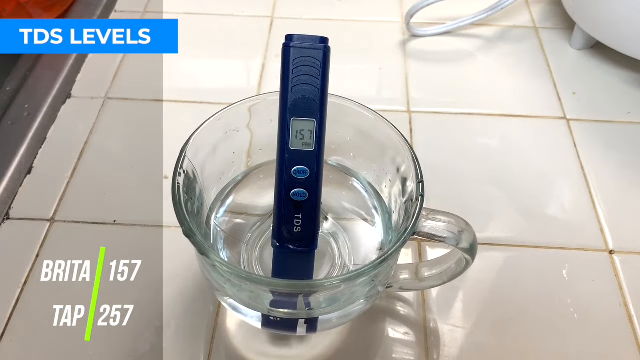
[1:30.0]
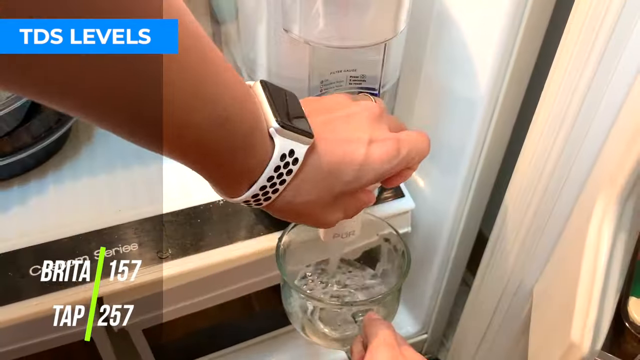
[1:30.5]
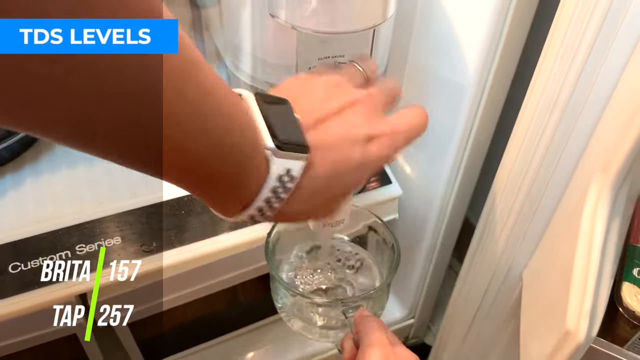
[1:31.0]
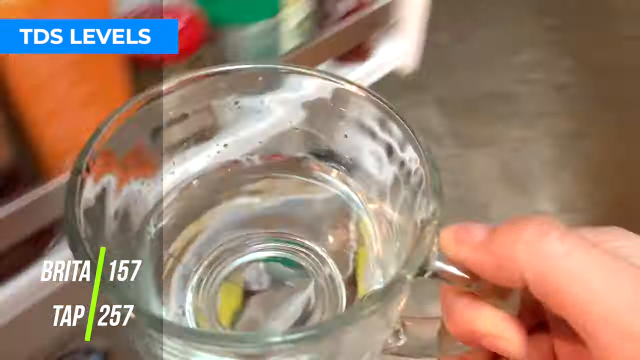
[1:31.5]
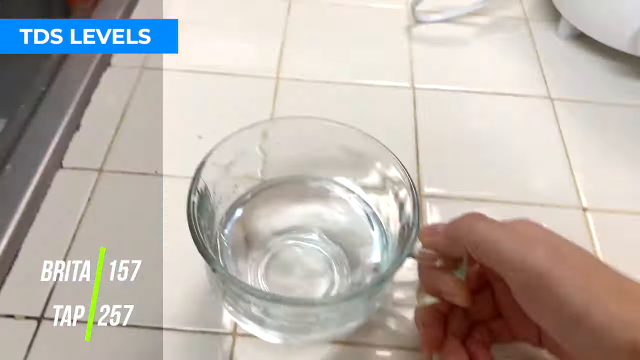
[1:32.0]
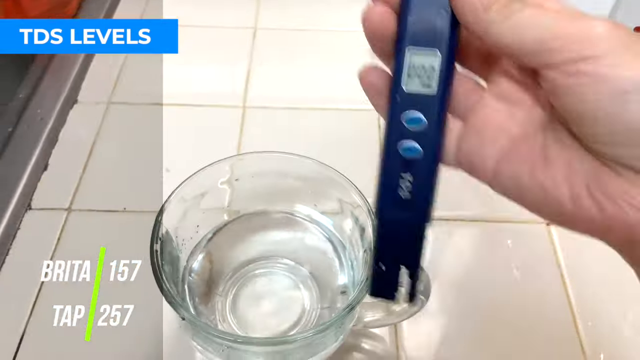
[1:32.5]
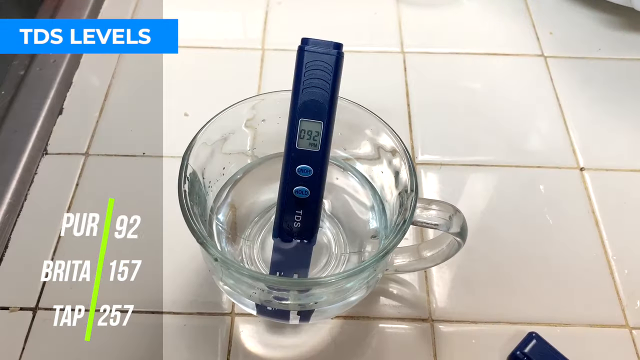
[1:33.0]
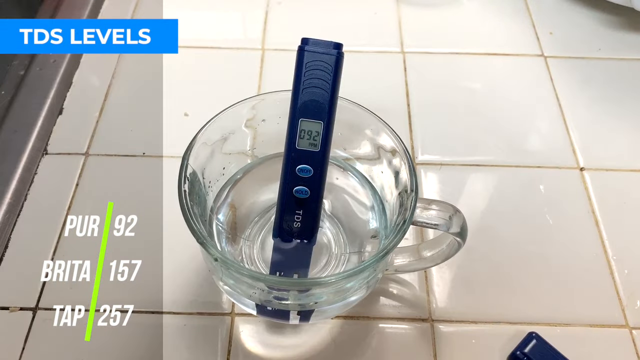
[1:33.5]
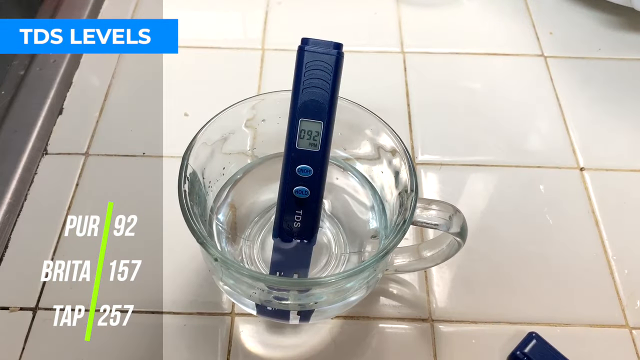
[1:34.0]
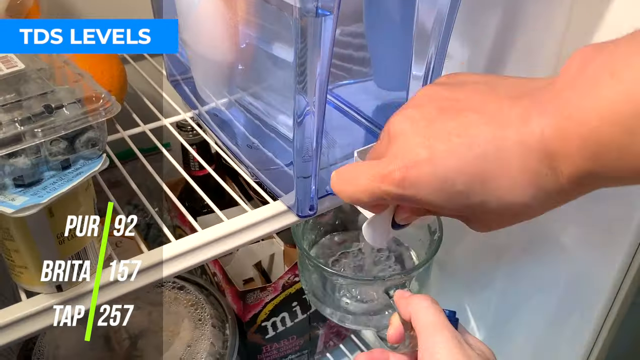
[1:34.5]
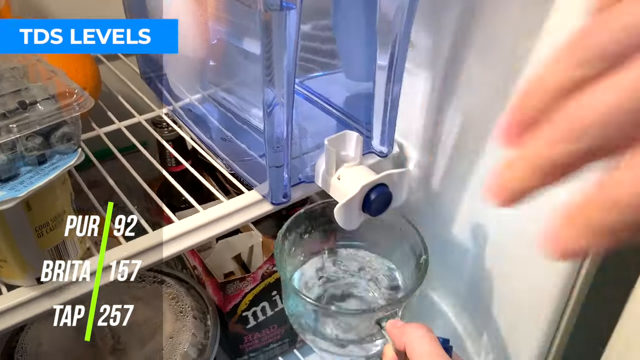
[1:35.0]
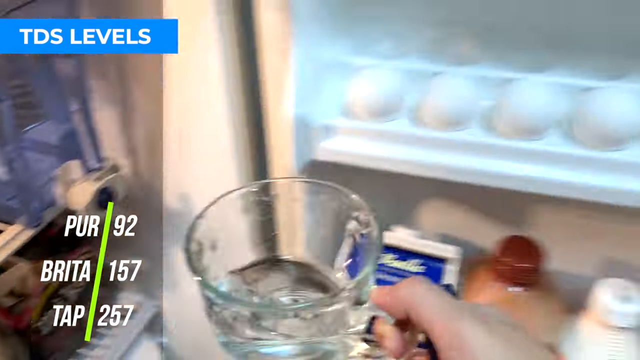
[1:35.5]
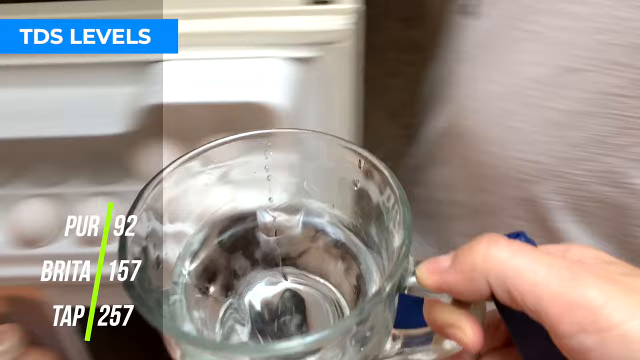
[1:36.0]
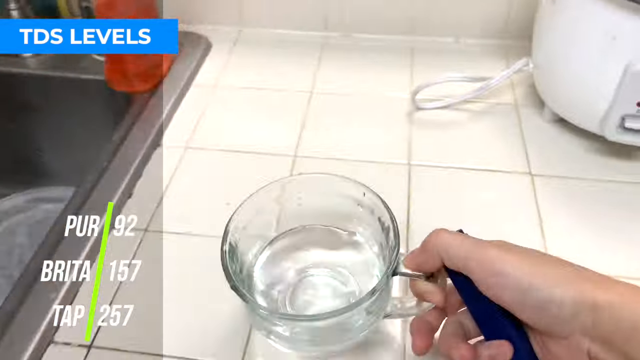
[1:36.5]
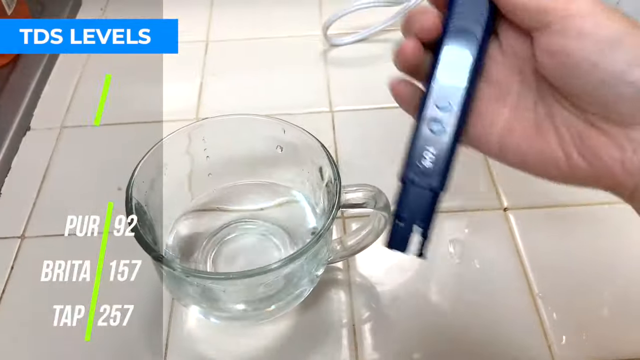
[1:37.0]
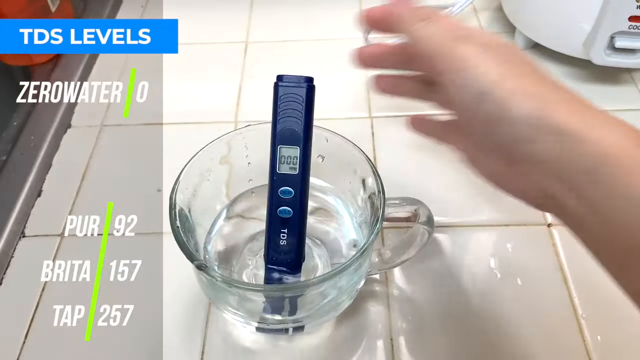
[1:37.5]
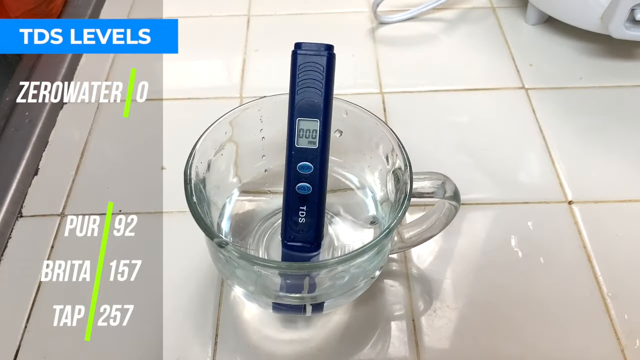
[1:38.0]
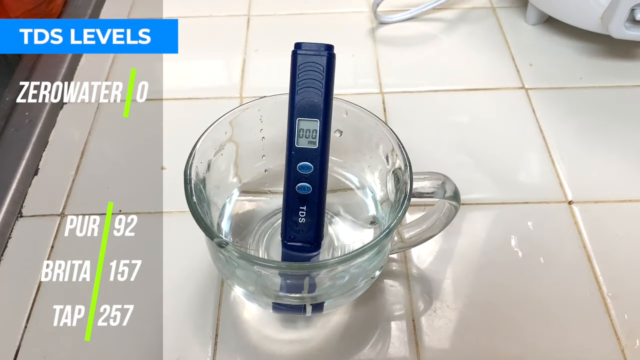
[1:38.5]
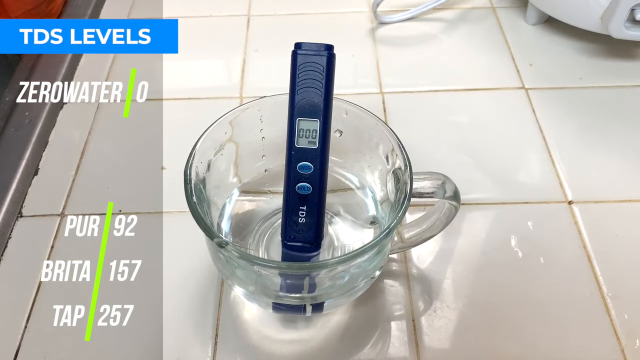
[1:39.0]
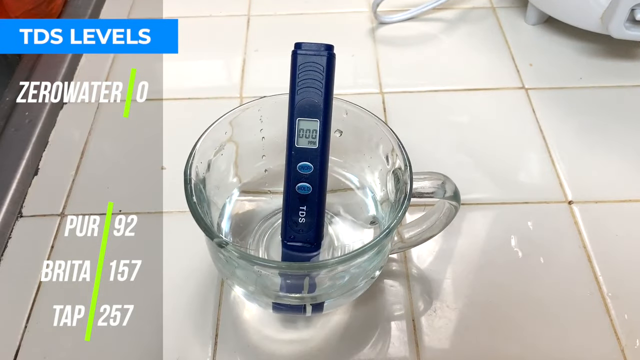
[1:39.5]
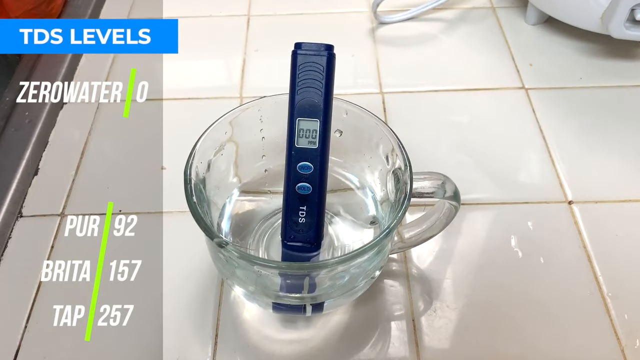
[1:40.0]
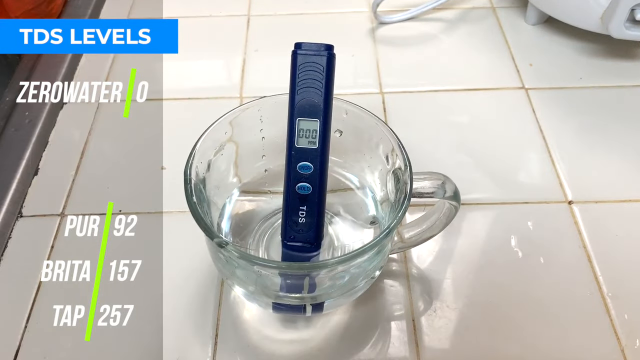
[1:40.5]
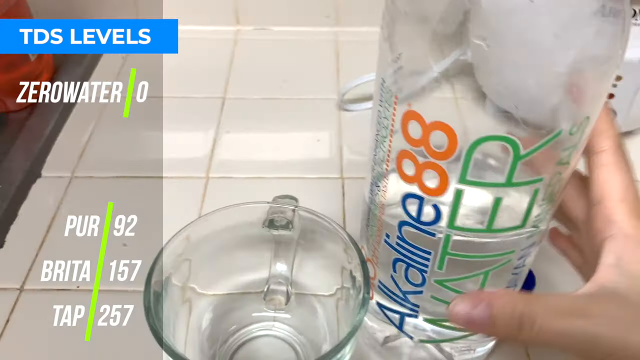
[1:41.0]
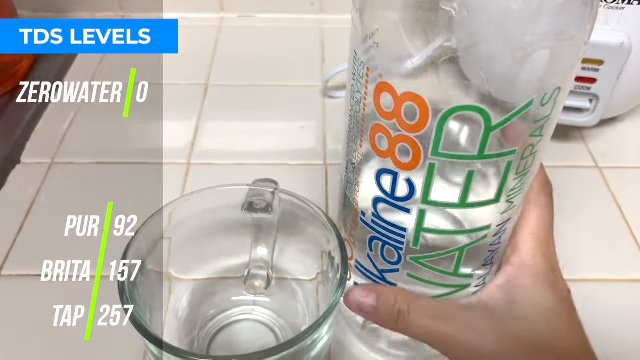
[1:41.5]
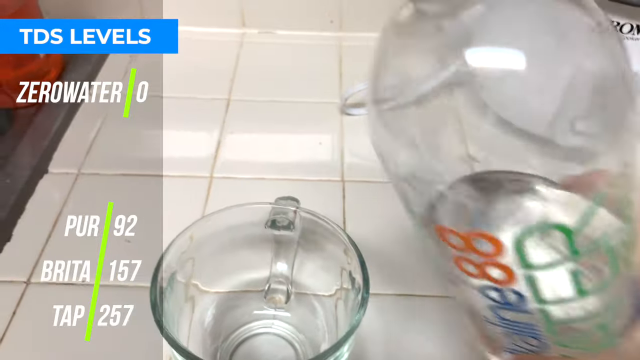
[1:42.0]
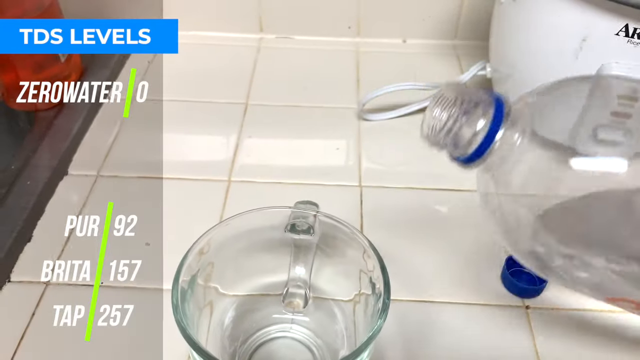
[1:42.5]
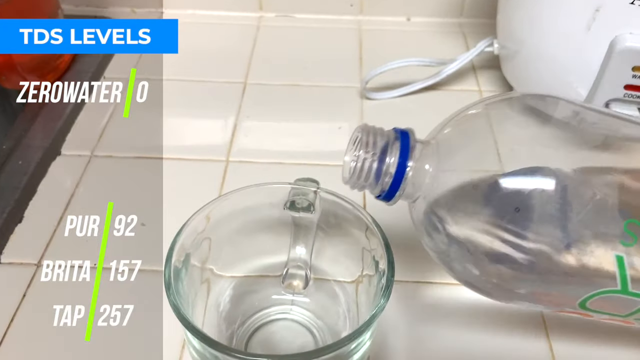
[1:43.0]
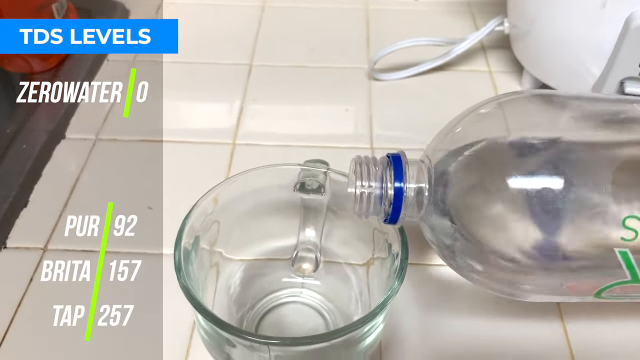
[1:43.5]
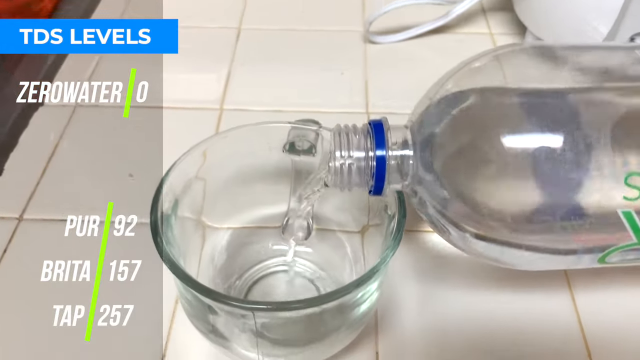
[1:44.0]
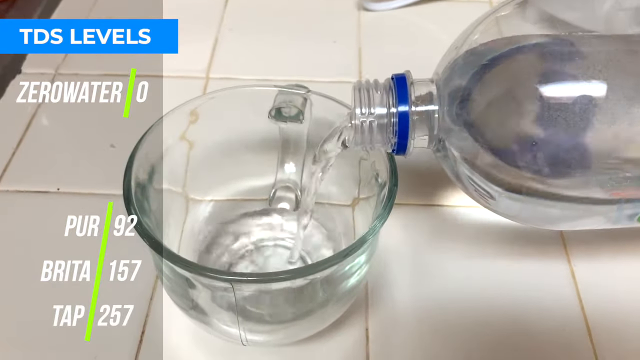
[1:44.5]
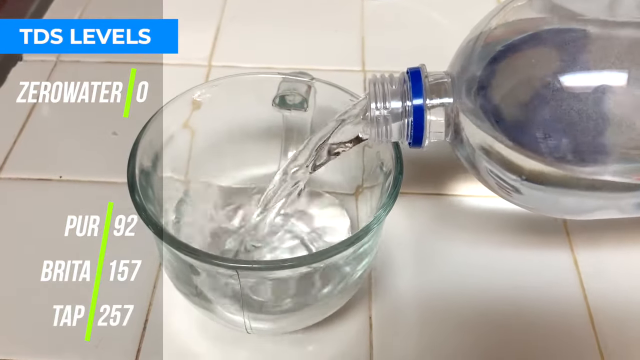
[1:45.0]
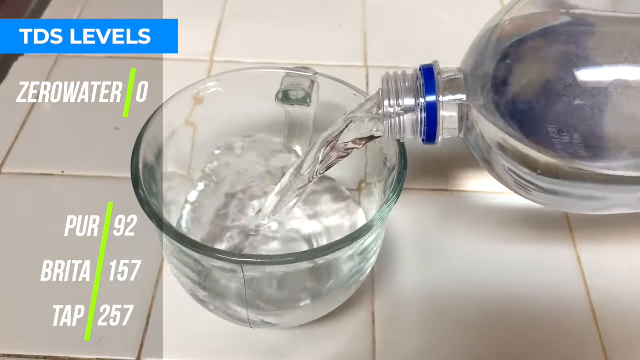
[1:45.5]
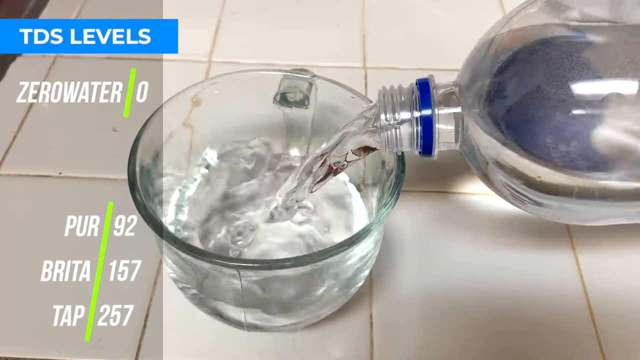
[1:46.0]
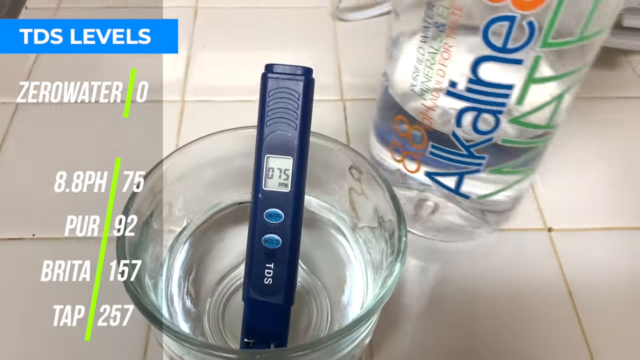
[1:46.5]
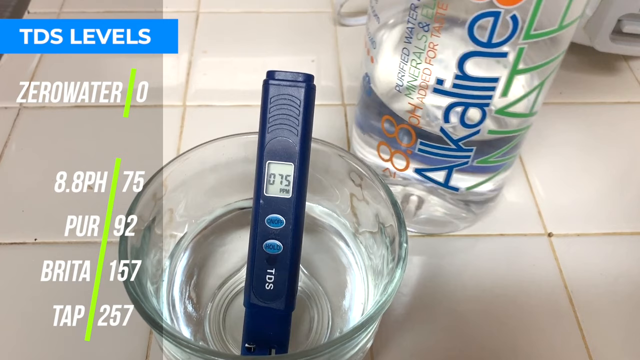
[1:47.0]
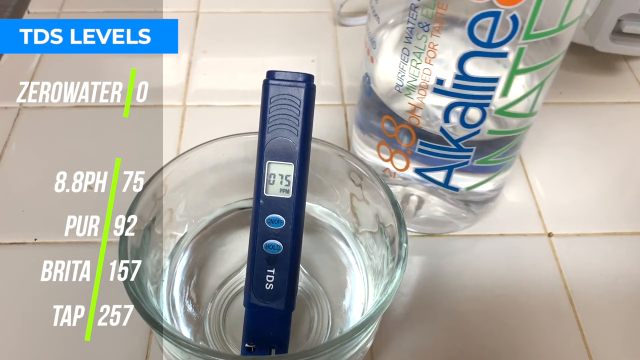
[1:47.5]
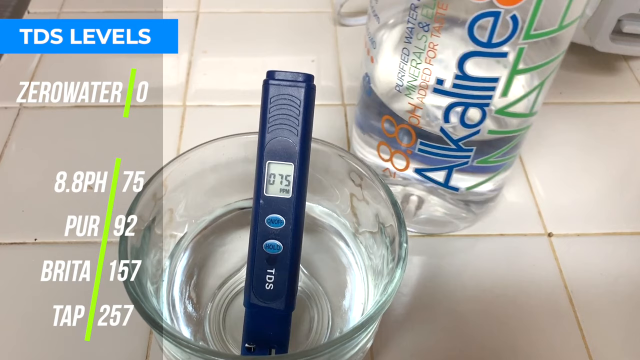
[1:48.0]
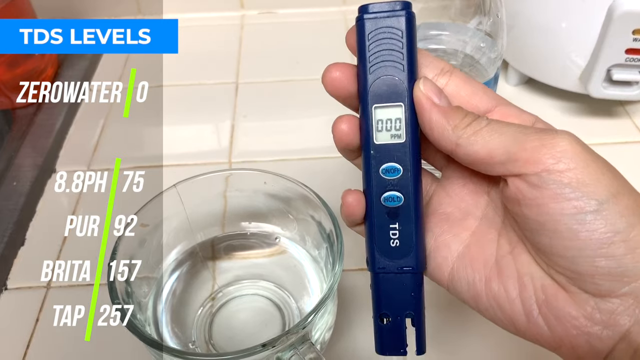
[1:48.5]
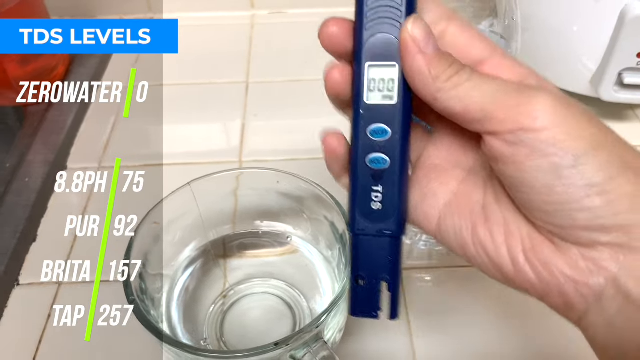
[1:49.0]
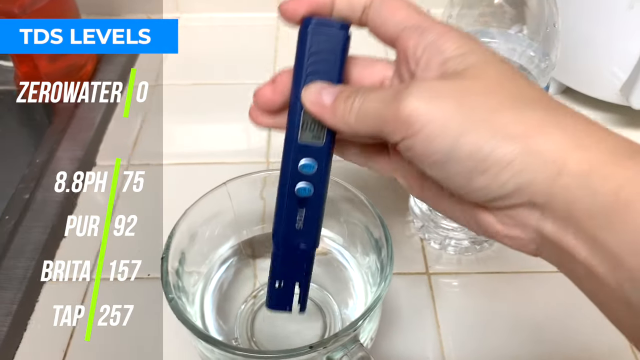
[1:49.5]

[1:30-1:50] After the tap water tests at 257 PPM on the TDS level indicator, the person opens the fridge and pours filtered water from the Brita, which reads 157 PPM. The person opens the fridge again and pours water from the Pure filter into a glass container on the white counter, which reads 92 PPM. Lastly, the person opens the refrigerator again to get water from the Zero Water filter, pouring it into the glass cup, and once it is placed on the counter it reads 0 ppm. The person then pours Alkaline 88 water from a store brand into the clear glass and tests its PPM level with the TDS level indicator, which reads 75 PPM.